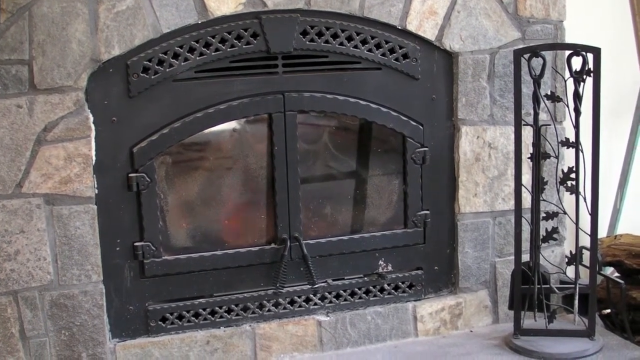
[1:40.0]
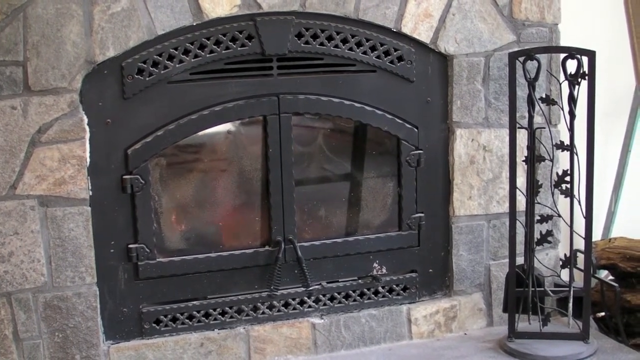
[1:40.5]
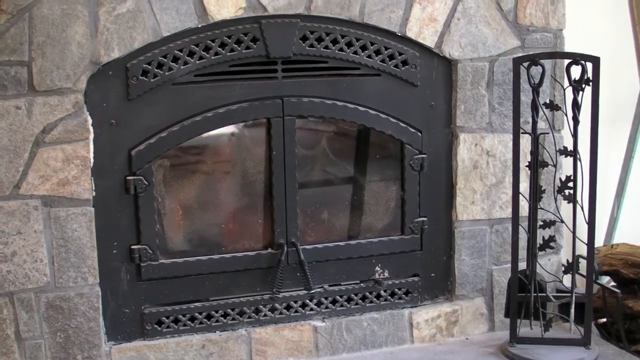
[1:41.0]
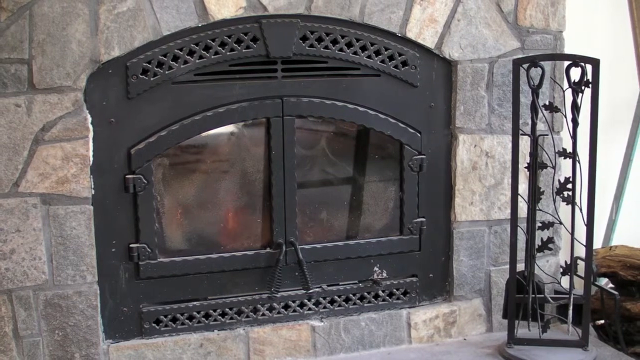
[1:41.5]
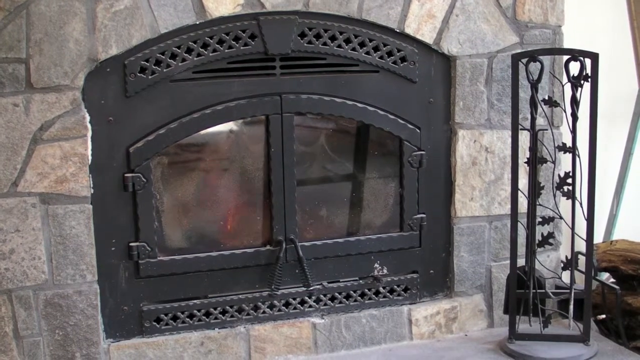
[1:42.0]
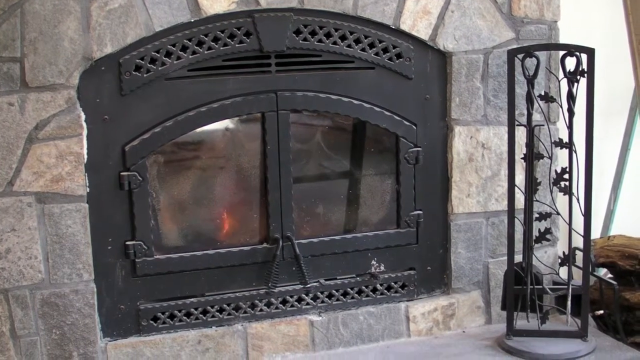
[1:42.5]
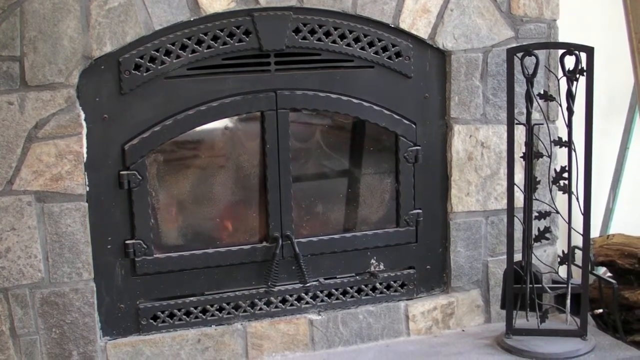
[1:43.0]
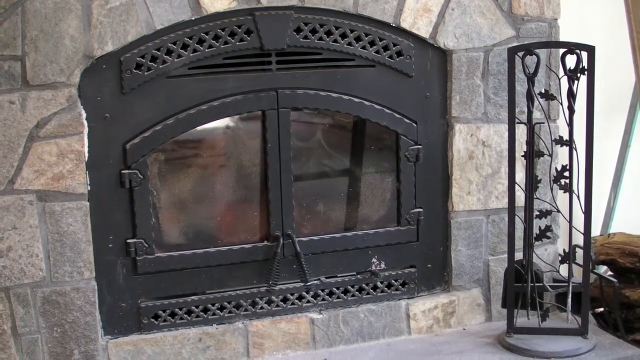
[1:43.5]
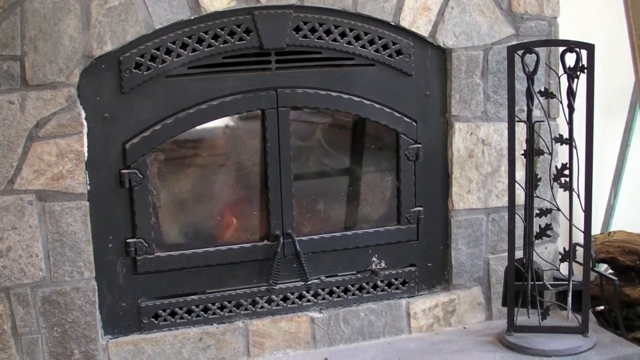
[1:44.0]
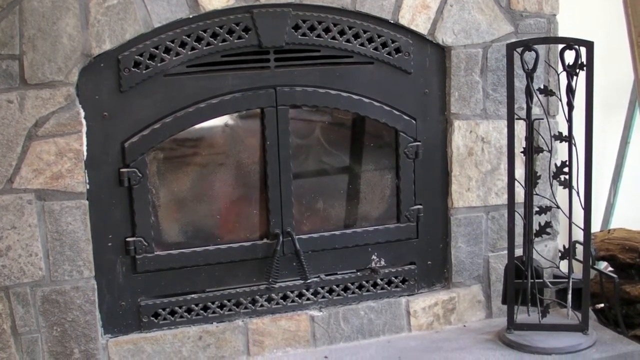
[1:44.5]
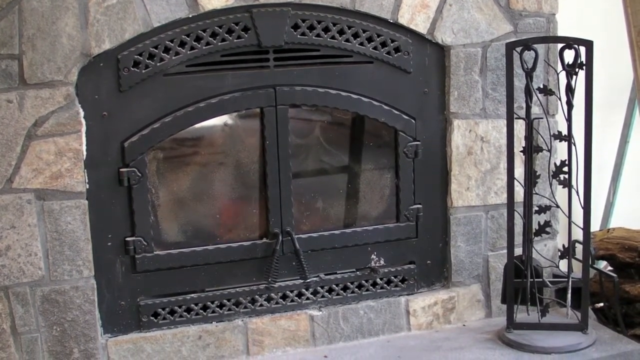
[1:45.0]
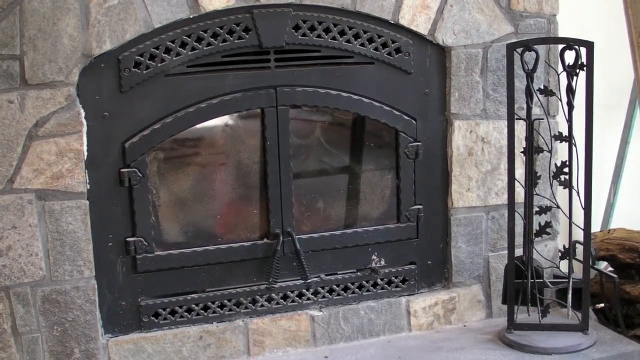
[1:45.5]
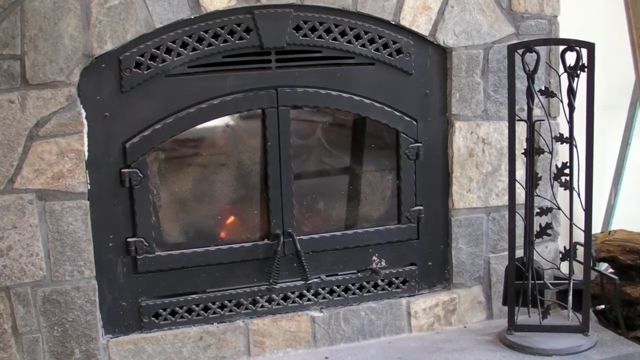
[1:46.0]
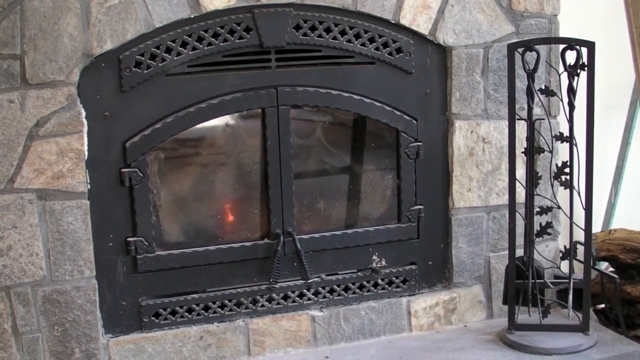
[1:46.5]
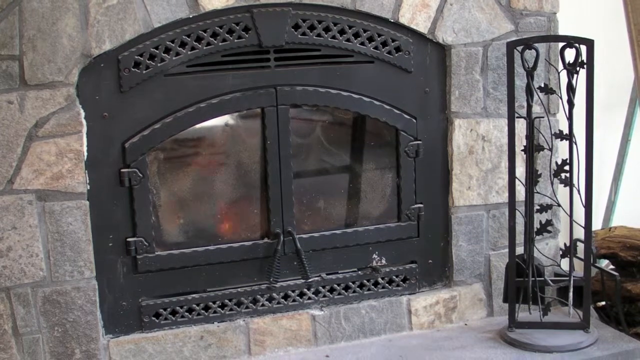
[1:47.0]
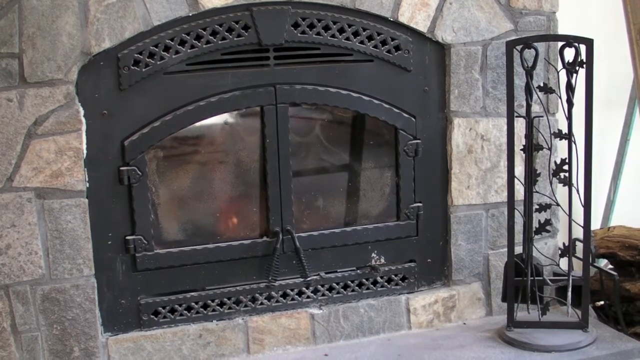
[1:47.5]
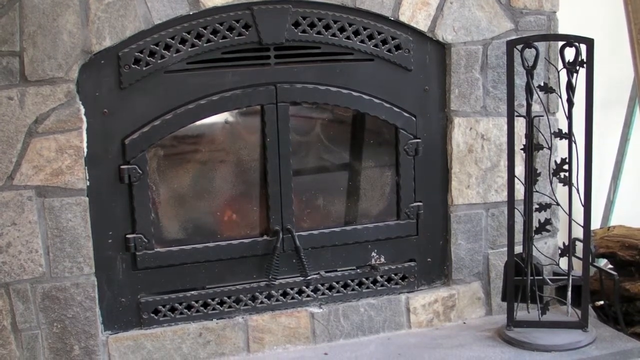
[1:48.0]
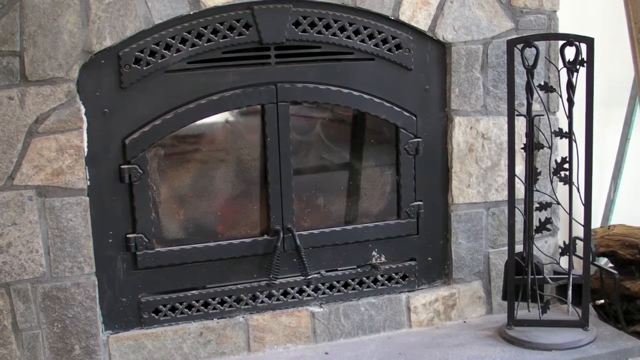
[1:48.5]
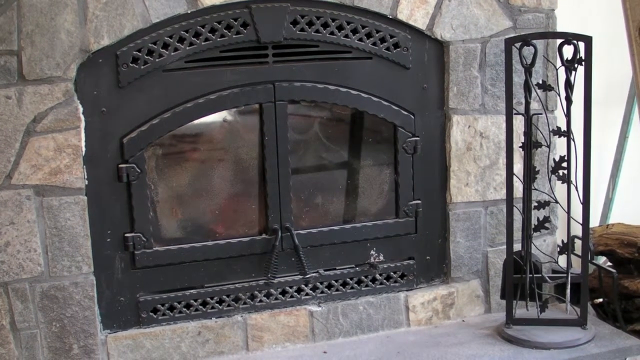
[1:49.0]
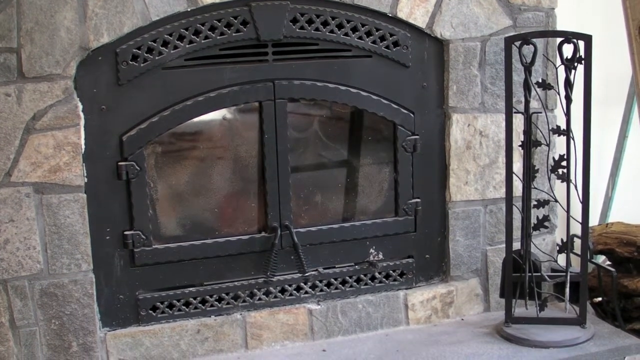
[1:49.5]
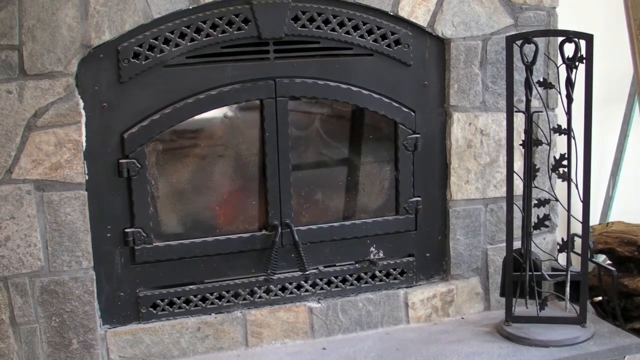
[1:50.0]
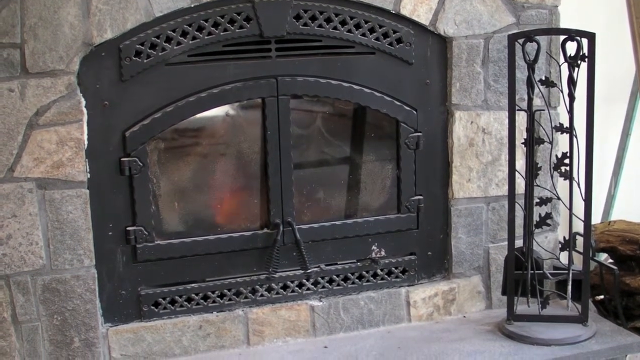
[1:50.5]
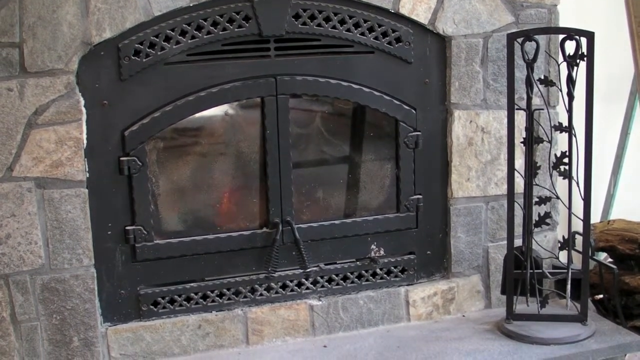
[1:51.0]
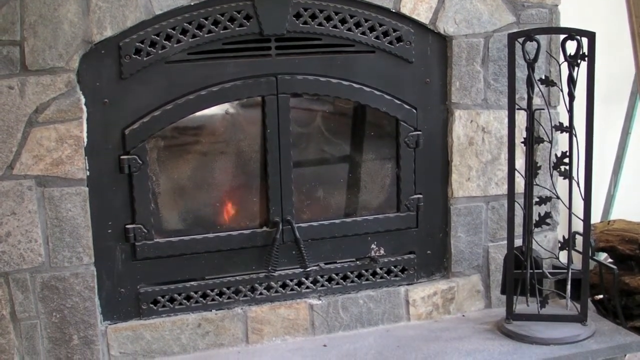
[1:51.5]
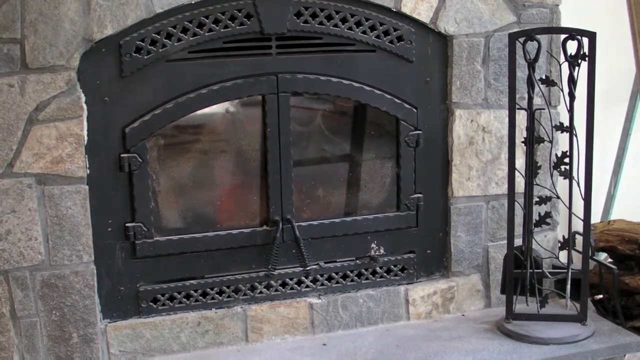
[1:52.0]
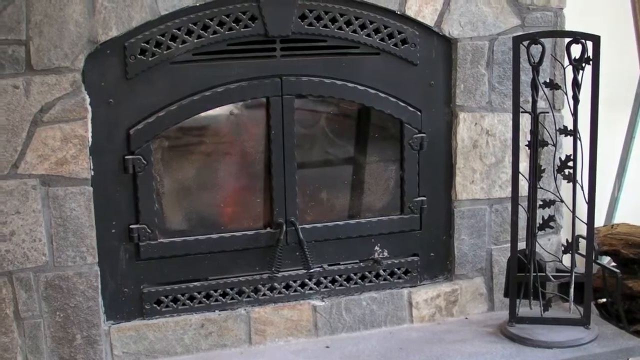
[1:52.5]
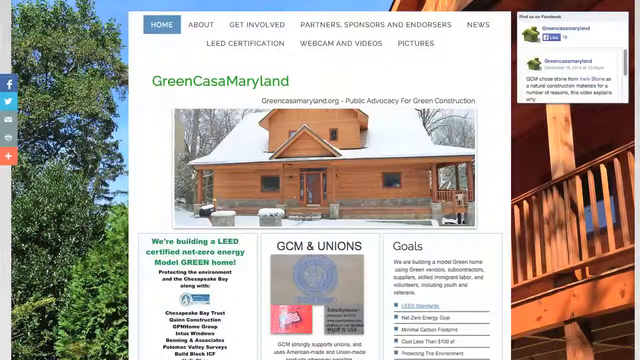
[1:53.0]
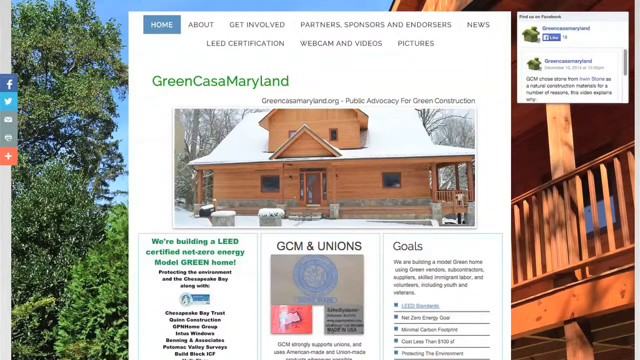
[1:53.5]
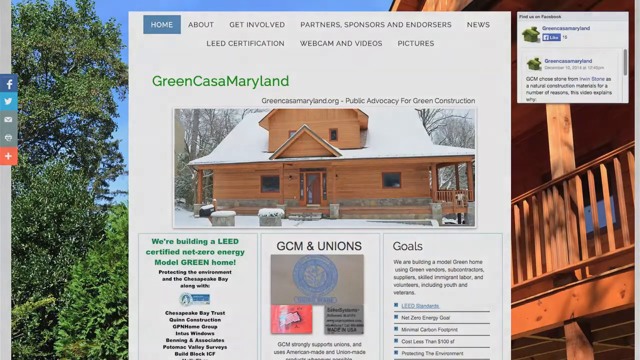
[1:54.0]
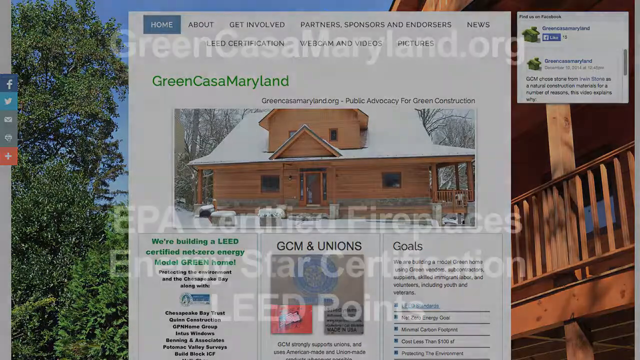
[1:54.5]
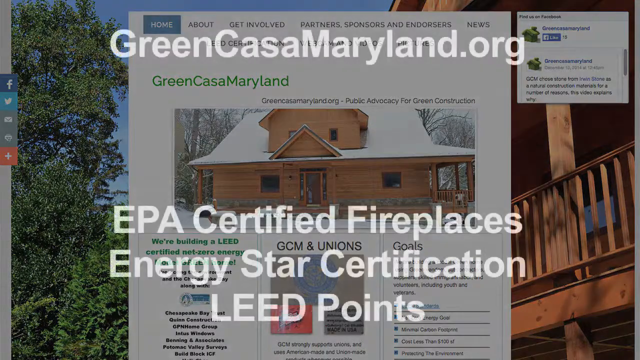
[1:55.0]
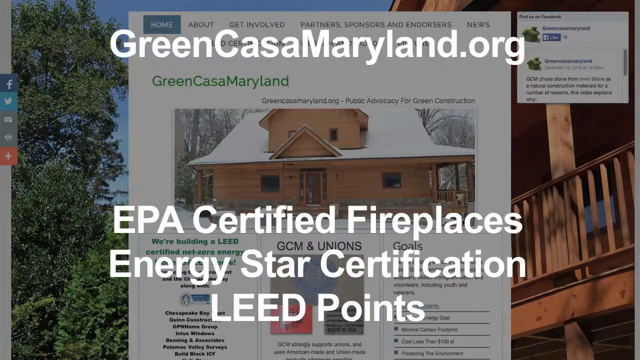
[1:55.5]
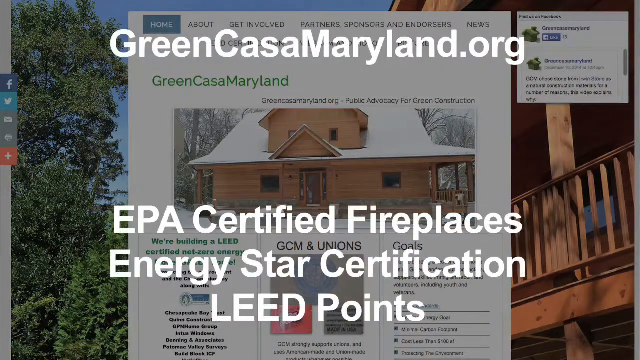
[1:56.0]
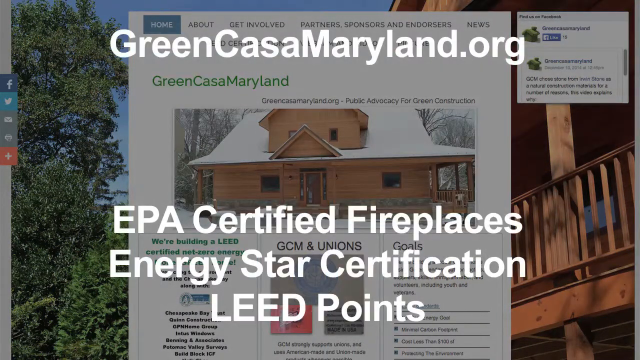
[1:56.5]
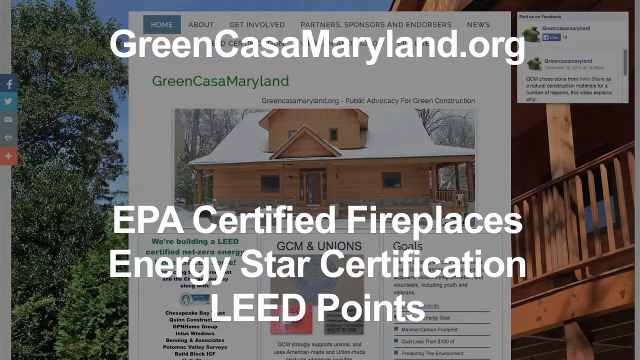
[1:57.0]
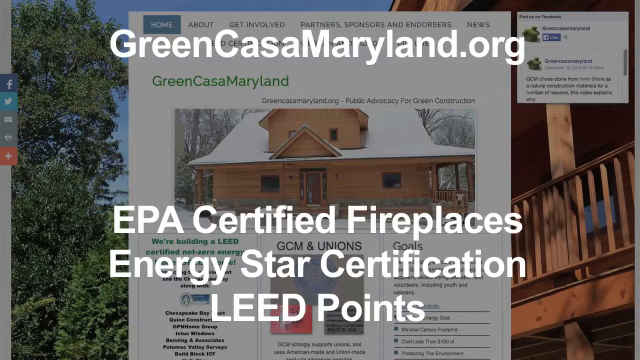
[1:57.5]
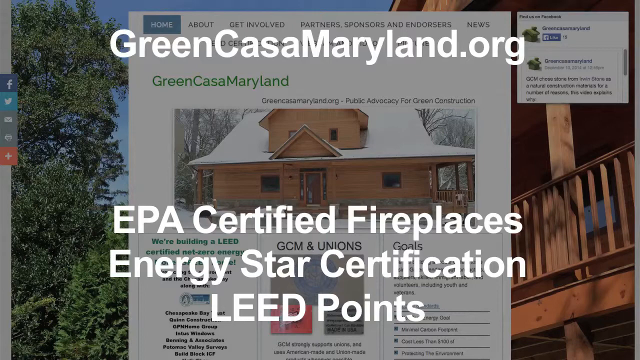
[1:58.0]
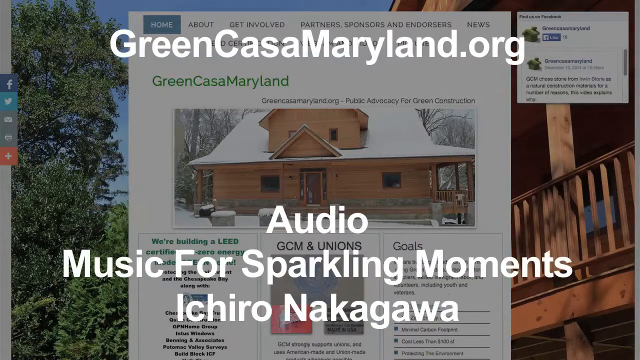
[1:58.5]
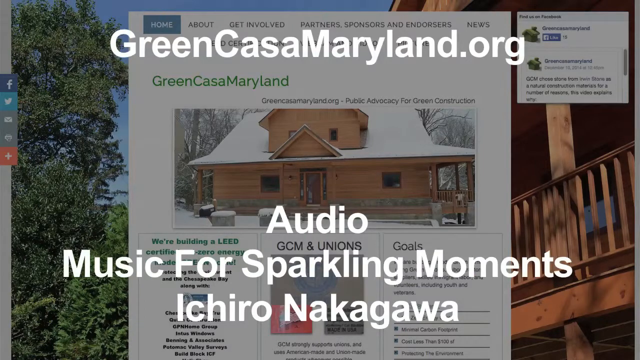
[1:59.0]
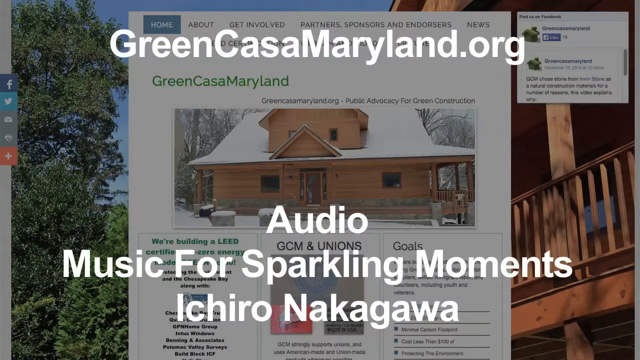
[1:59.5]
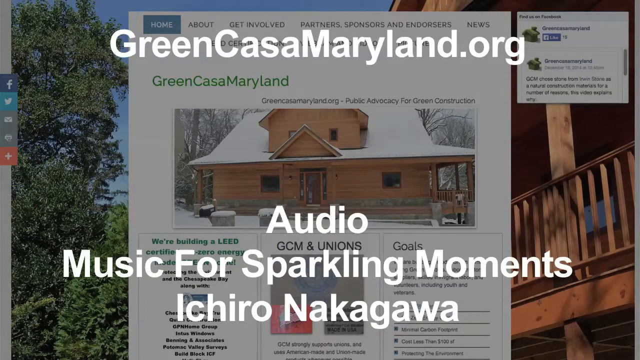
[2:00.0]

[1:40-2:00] The finished fireplace is shown on the wall. The video then shows the Greencastle Maryland website, with sections for home, about, get involved, partners, sponsors and endorsers, webcam and videos, and pictures, and the address greencastlemaryland.org. The site lists EPA certified fireplaces, lead credit categories, low-emission EPA certified fireplaces, heat and glow non-star fireplaces, and figures for BTUs and square feet.